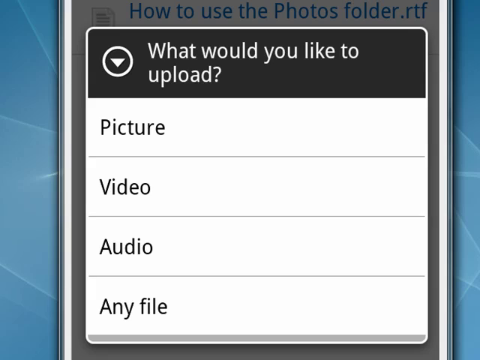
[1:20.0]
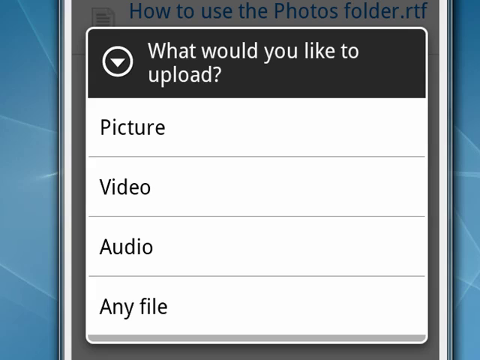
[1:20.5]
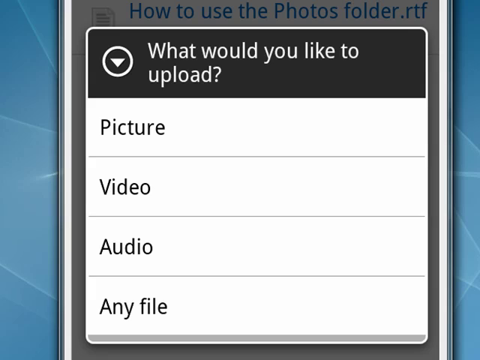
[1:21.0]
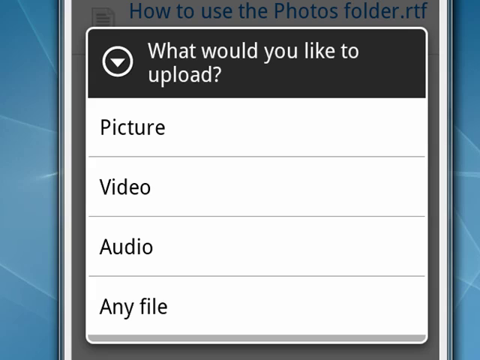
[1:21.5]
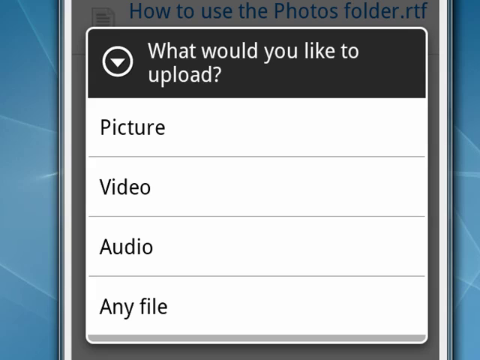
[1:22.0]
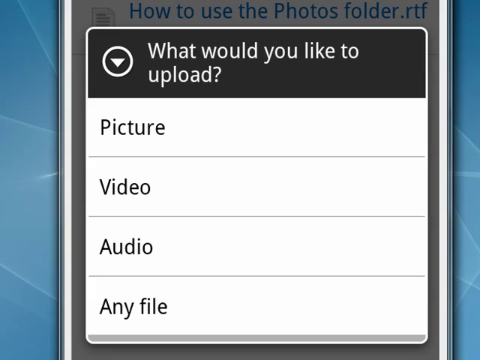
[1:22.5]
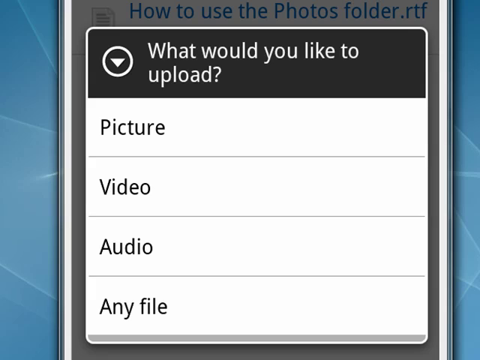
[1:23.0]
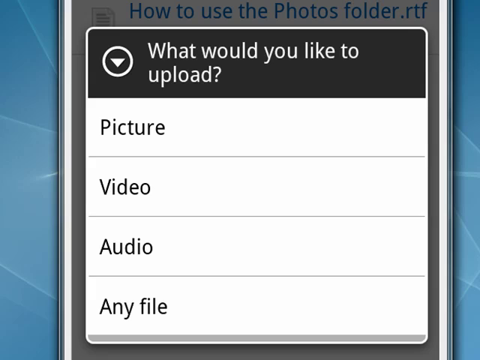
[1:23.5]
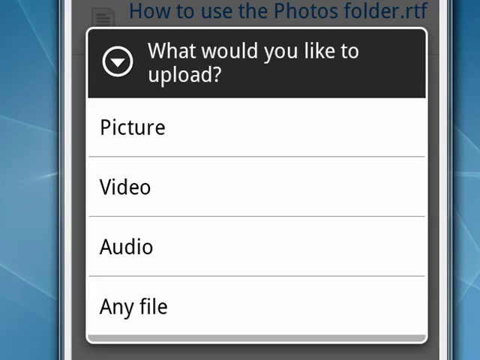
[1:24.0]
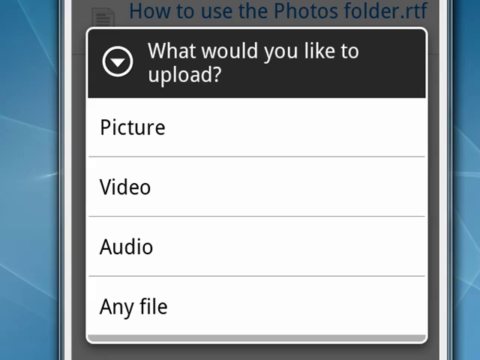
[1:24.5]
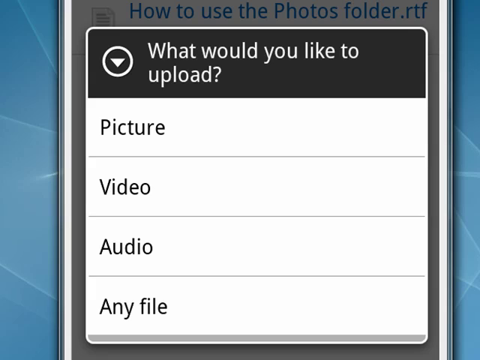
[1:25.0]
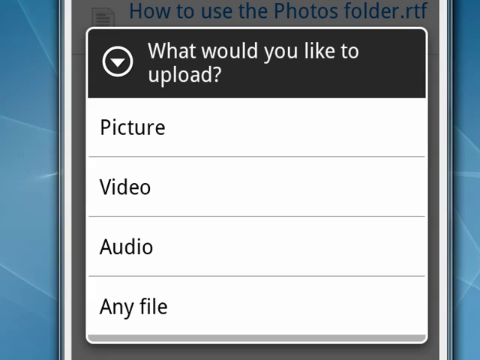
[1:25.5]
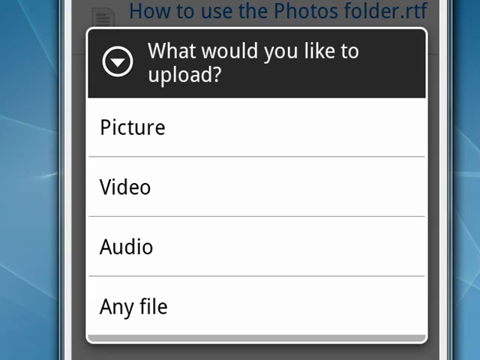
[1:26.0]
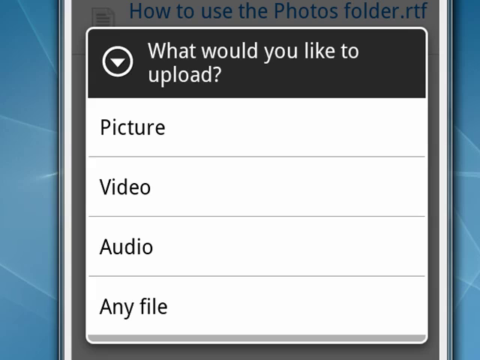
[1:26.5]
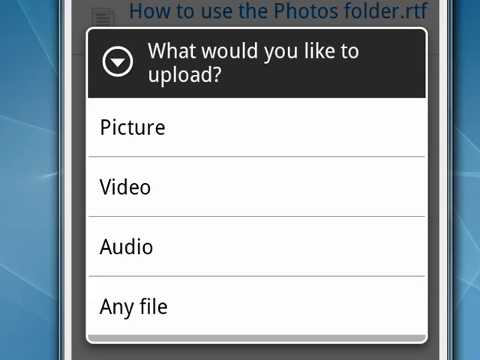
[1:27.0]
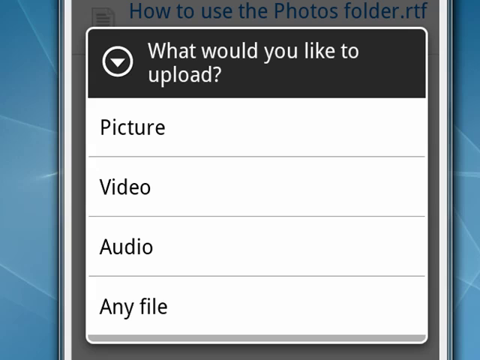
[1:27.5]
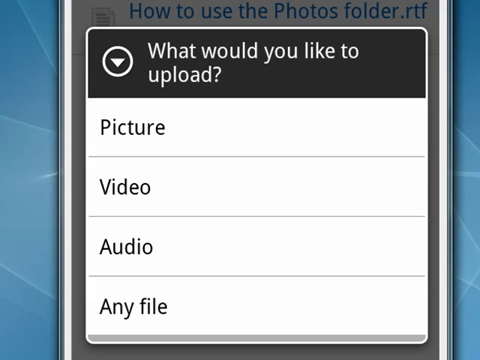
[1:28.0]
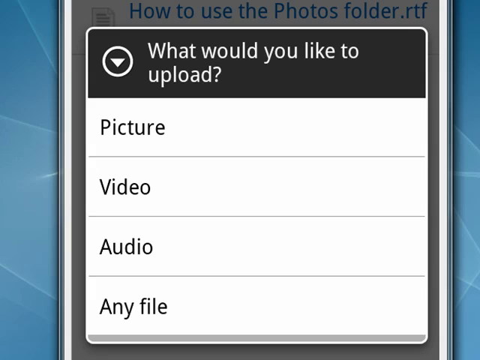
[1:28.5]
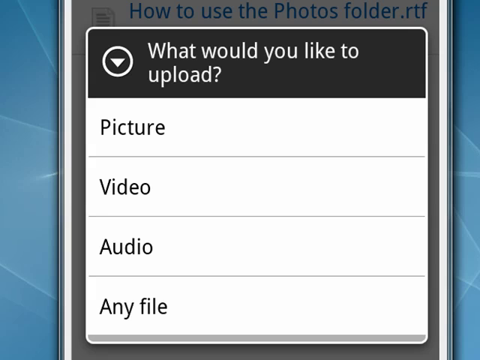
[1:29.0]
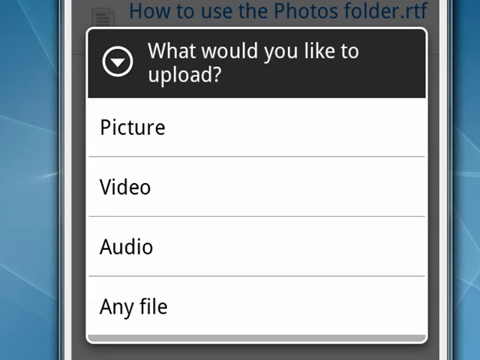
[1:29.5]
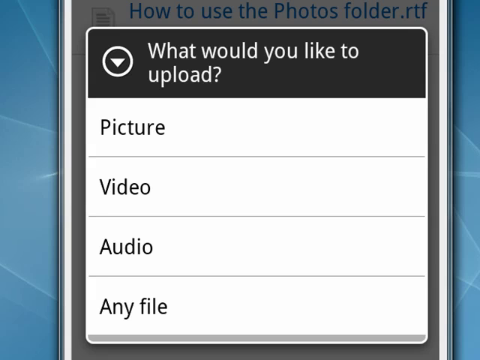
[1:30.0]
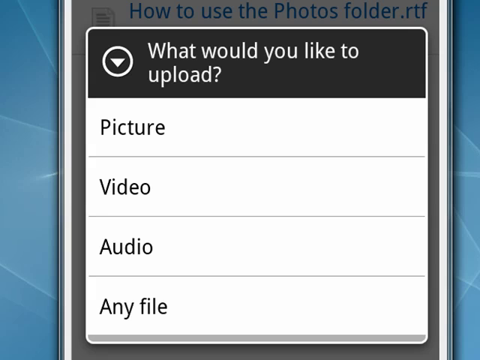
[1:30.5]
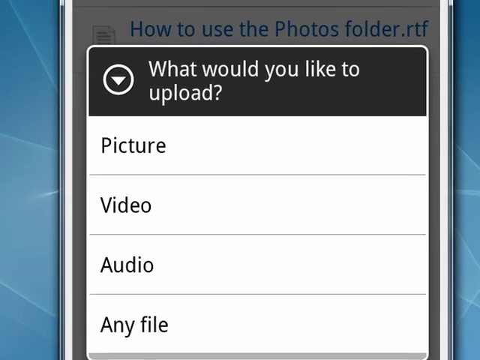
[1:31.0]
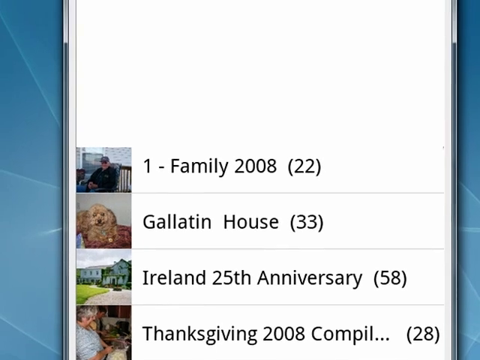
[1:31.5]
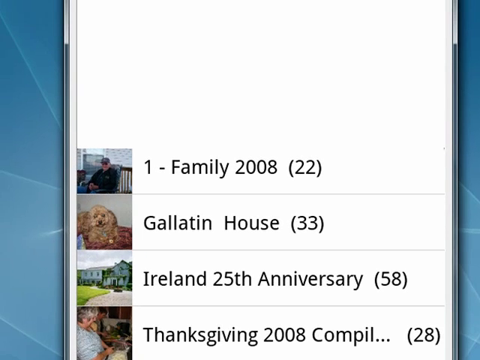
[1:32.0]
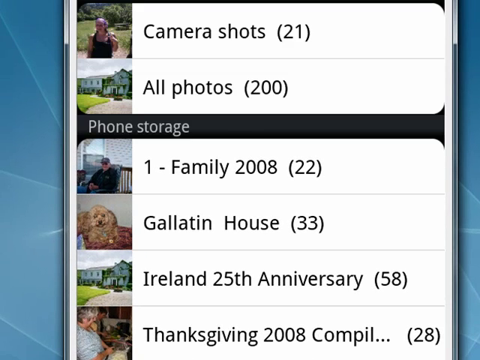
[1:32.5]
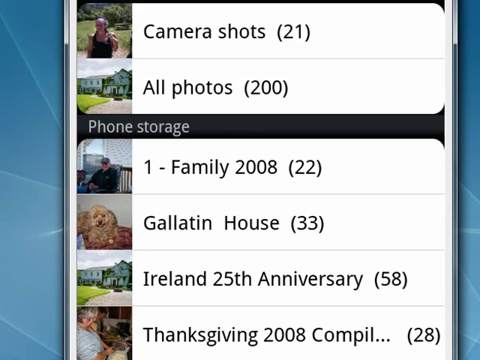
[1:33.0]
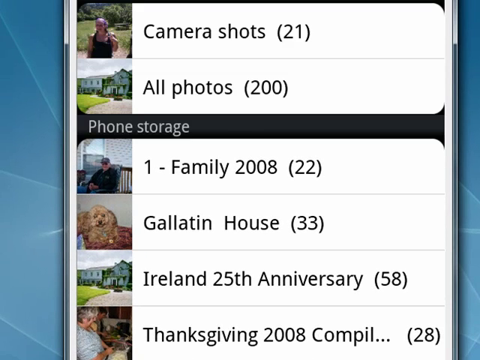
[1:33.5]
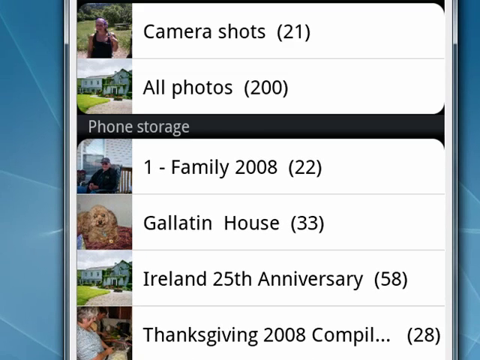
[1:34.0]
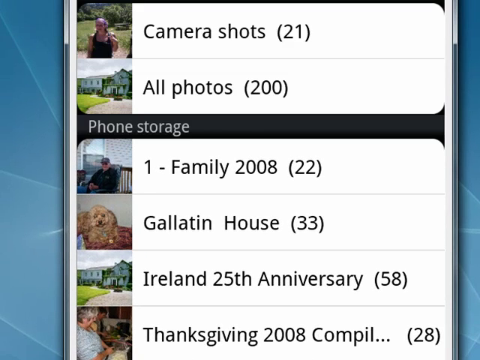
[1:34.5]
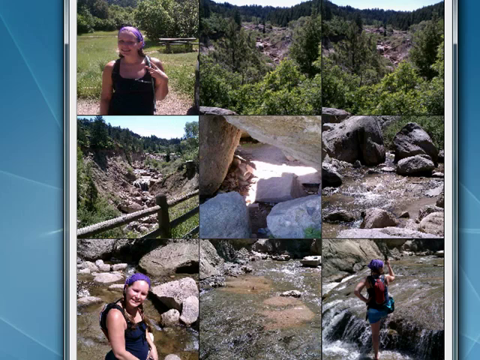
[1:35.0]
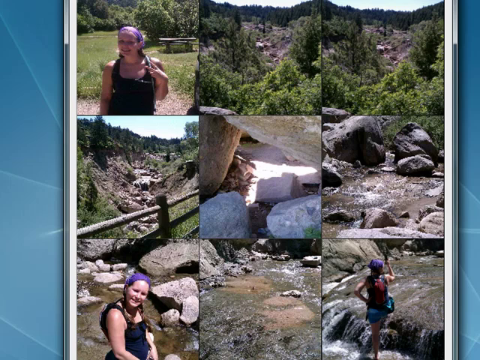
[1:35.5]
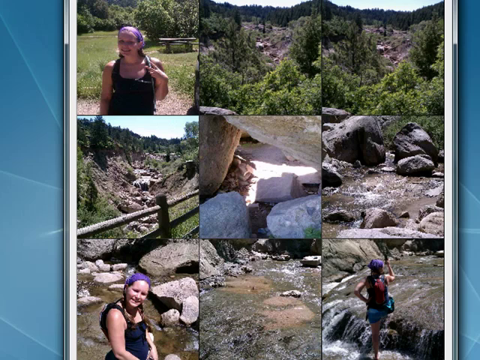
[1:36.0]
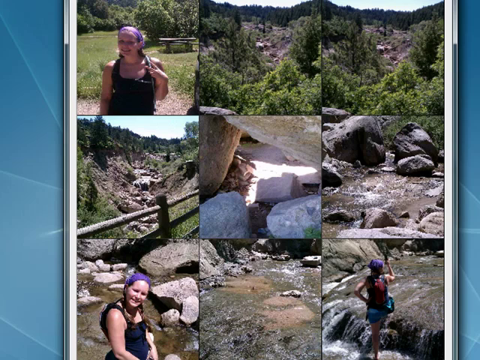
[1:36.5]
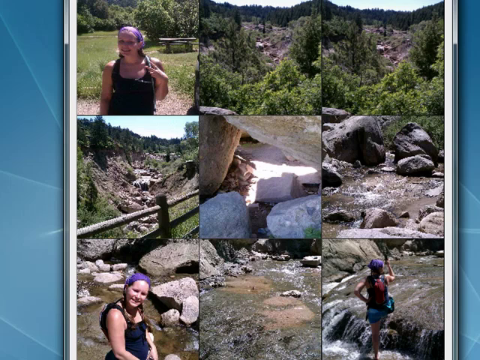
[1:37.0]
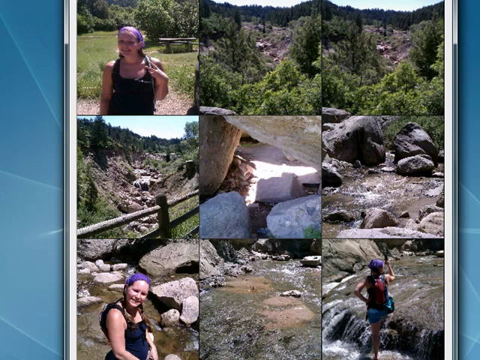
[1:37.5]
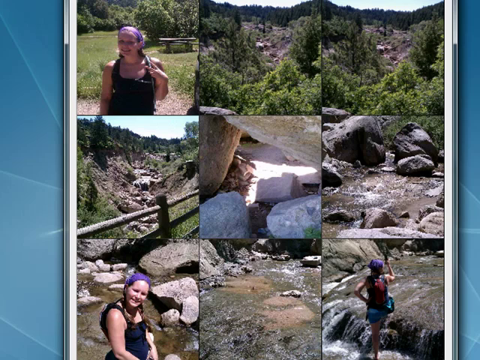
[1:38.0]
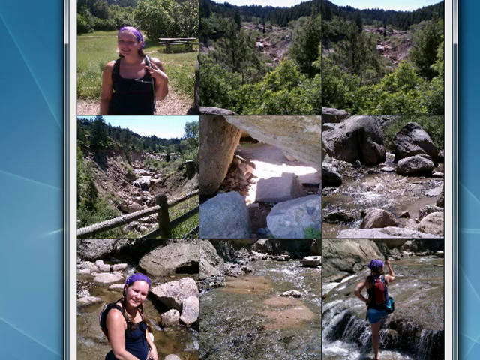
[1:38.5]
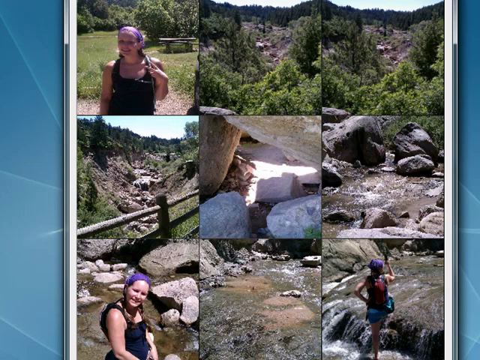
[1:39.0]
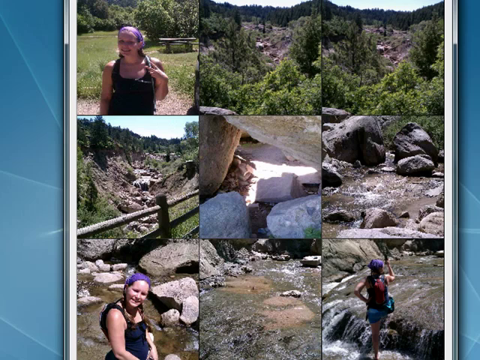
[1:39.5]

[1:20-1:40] A pop-up appears in Dropbox. Its first line is black with white font and says "what would you like to upload?" Below it are four lines in white with black font: "picture", "video", "audio" and "any file". Next, the top part of the screen is white and photo albums are shown: a picture of an old man sitting in a chair with "family photo family 2008" and 22 pictures; a picture of a little beige dog; "Galatin house" with 33; a picture of a two-story house; "Ireland 25th anniversary" with 58; a picture of the back of a woman's head with "Thanksgiving 2008" and 28. More items appear at the top: "camera shot" with 21 and "all photos" with 200. The person appears to click on Photos, which looks like it shows someone's hiking trip: a picture of a girl posing and various natural environment shots.